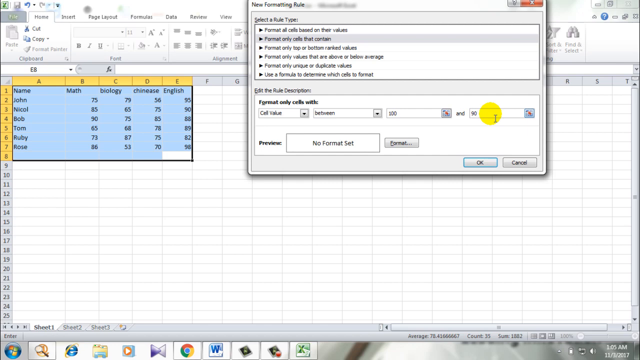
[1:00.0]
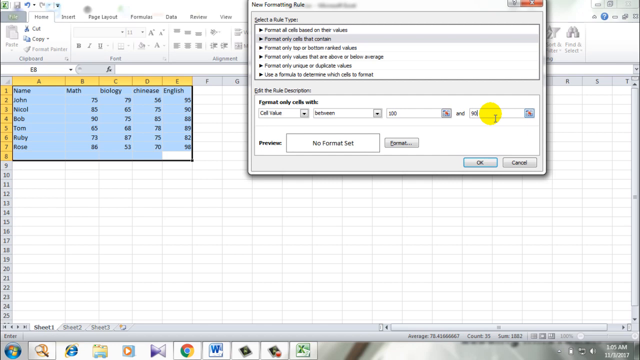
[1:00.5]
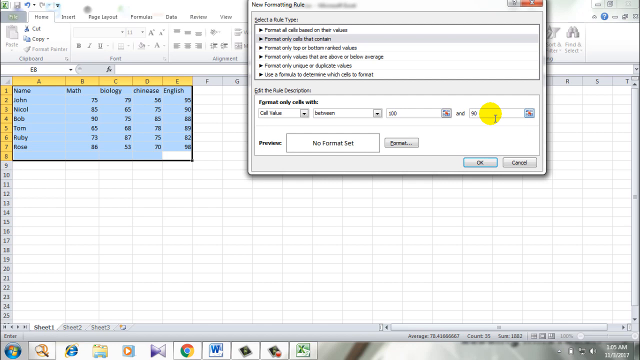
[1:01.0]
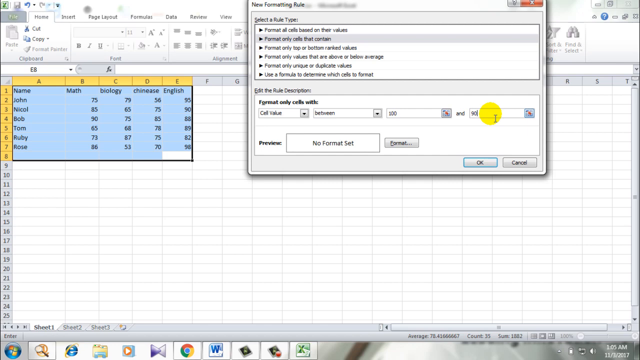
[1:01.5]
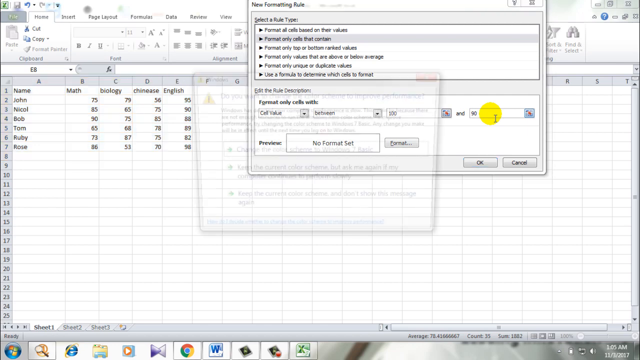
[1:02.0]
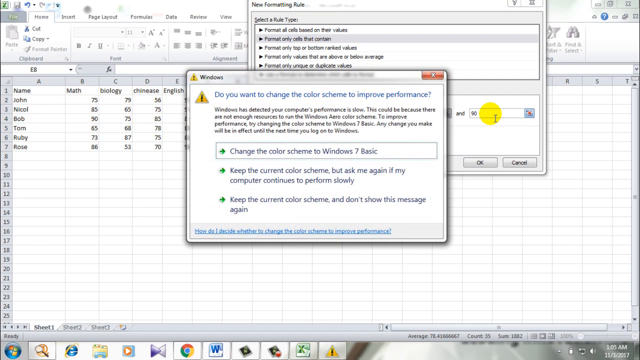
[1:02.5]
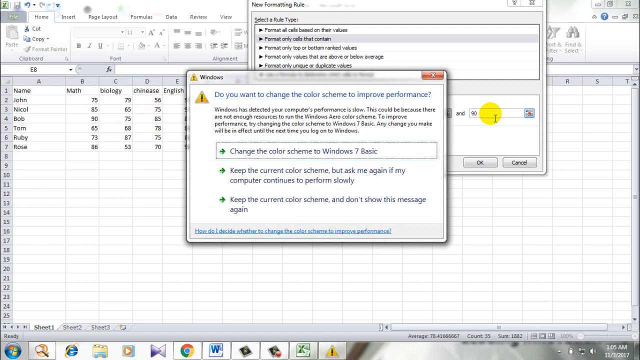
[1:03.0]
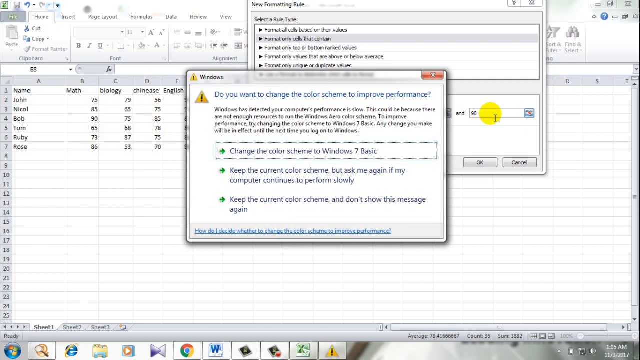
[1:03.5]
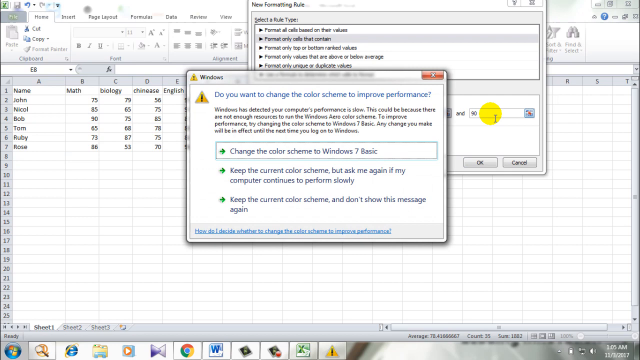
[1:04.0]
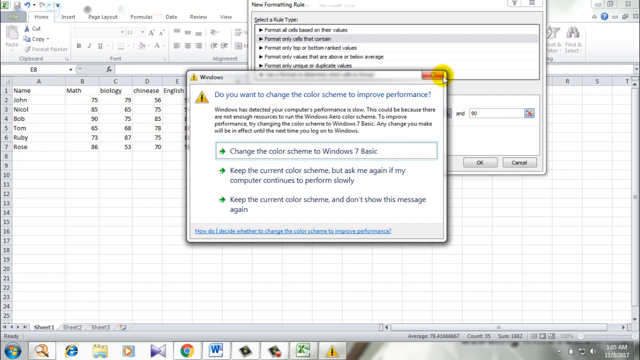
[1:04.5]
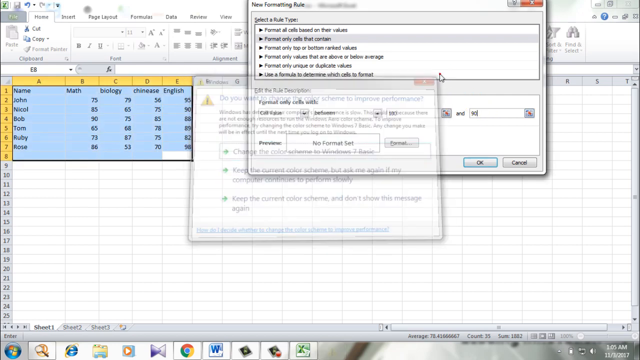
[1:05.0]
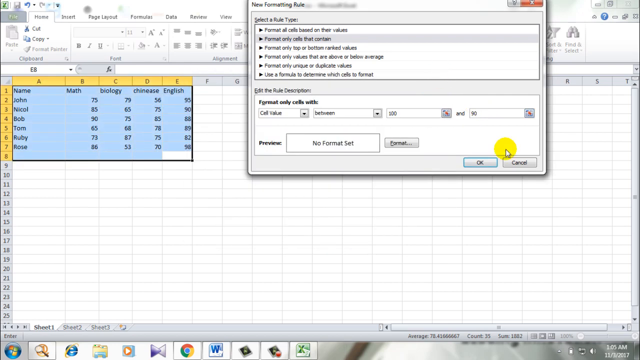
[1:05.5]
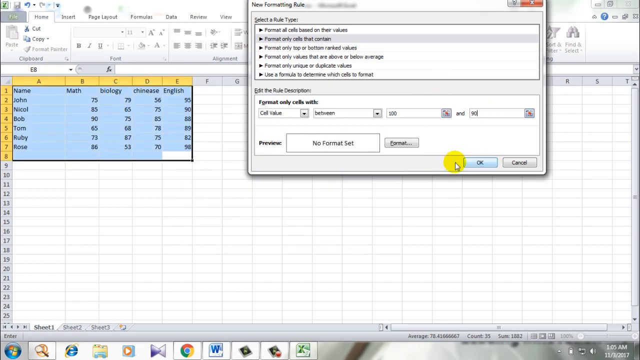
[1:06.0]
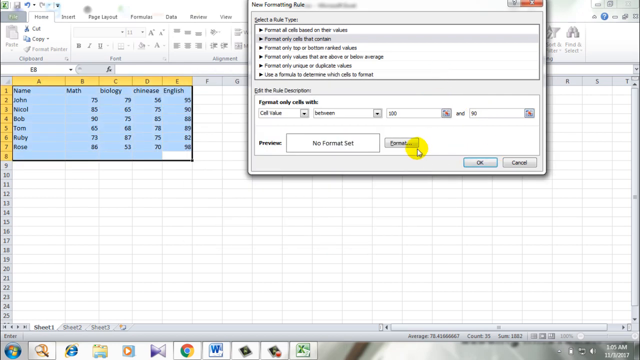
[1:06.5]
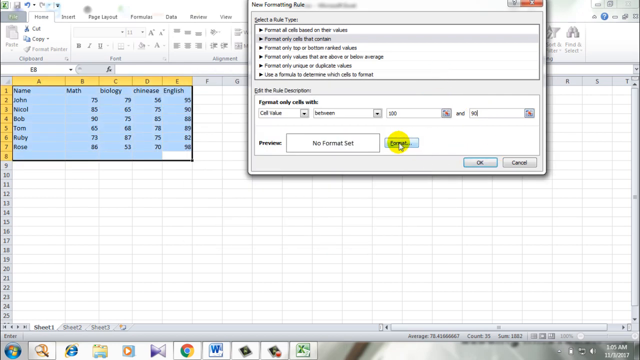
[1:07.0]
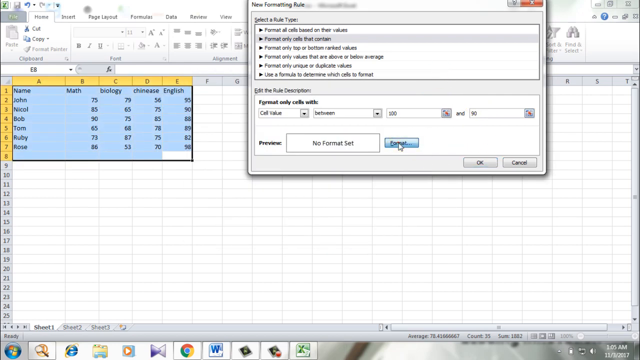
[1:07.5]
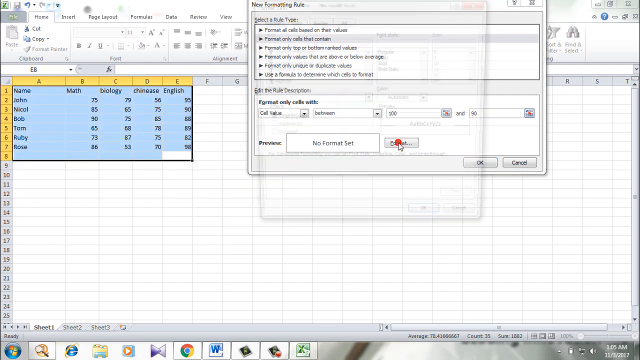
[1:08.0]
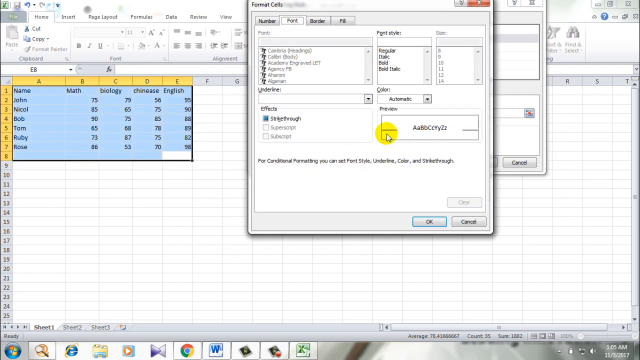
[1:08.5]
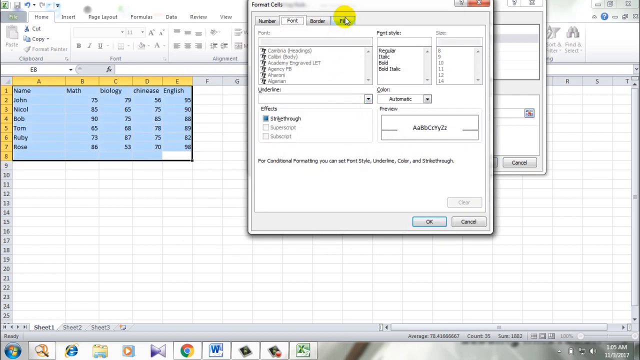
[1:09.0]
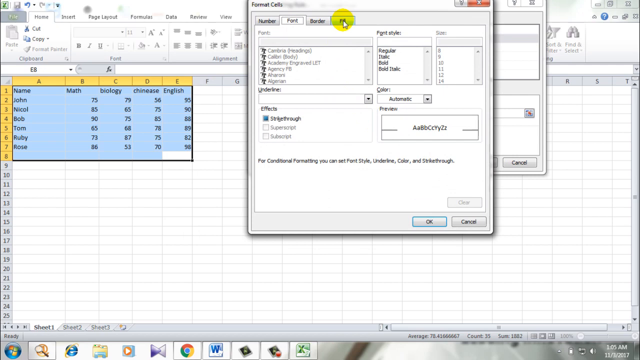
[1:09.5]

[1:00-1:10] The conditional formatting of the table continues. The table is five columns wide, with student names, math, biology, Chinese and English, and seven rows deep, listing the students John, Nicole, Bob, Tom, Ruby and Rose. The instructor, whose cursor has a yellow circle around it, has highlighted from cell E8 up to A1, the entire table plus one row below, gone into Conditional Formatting, and set a rule for cells between 90 and 100. He then goes into Format and into Fill.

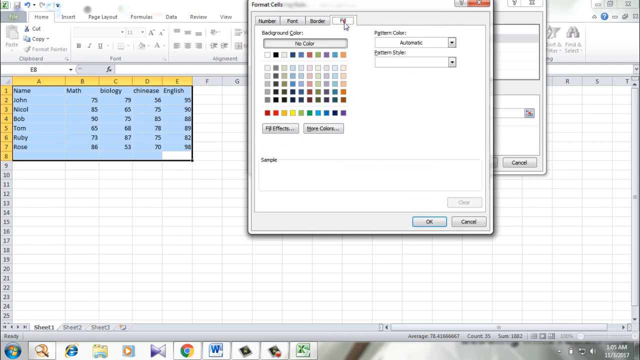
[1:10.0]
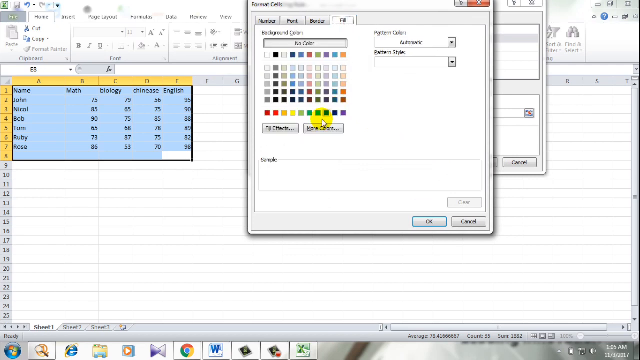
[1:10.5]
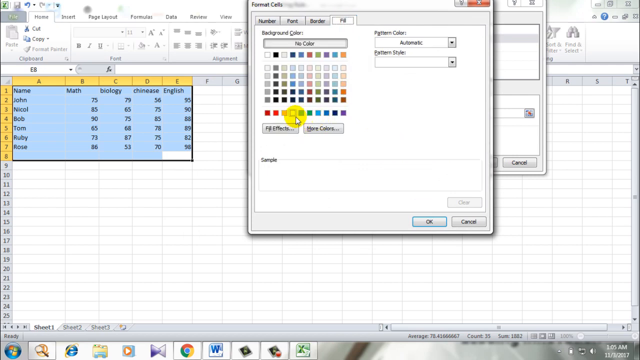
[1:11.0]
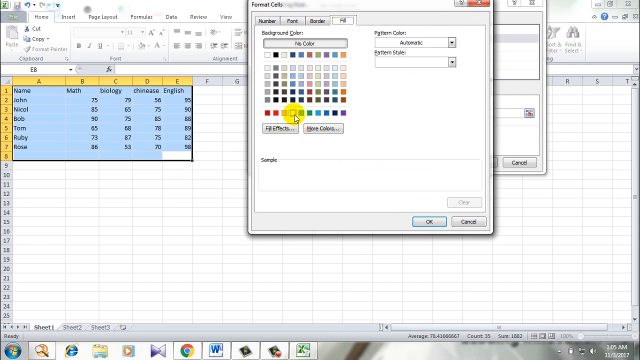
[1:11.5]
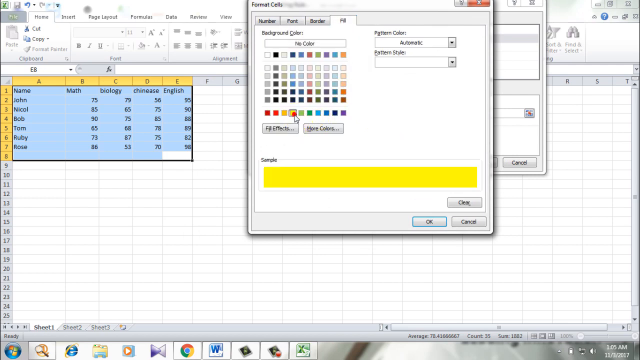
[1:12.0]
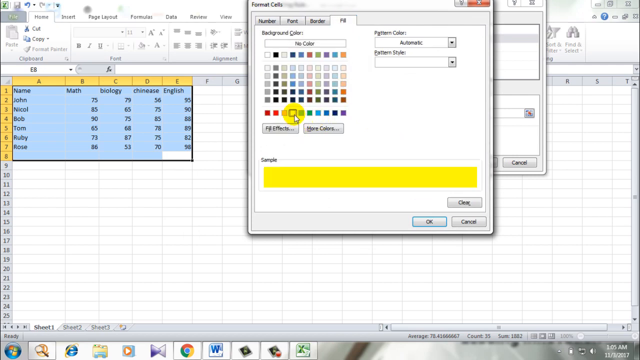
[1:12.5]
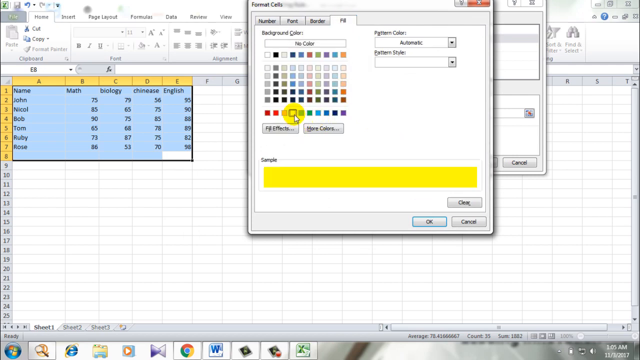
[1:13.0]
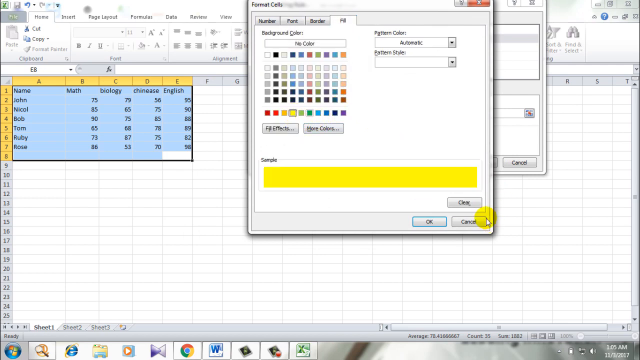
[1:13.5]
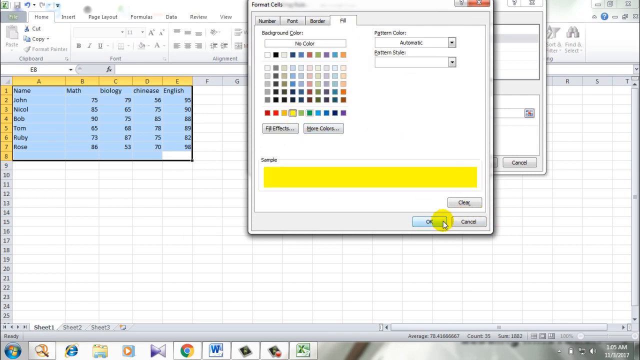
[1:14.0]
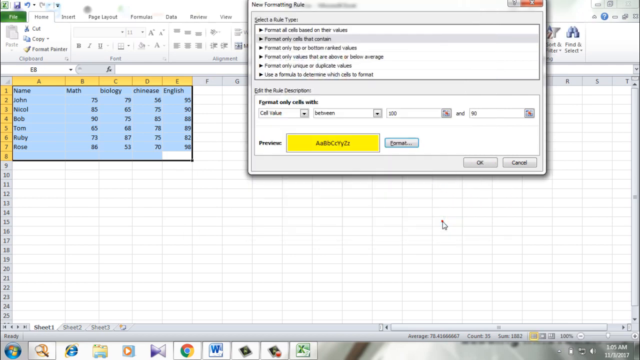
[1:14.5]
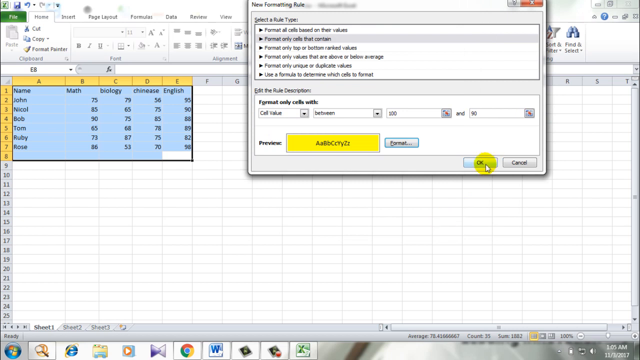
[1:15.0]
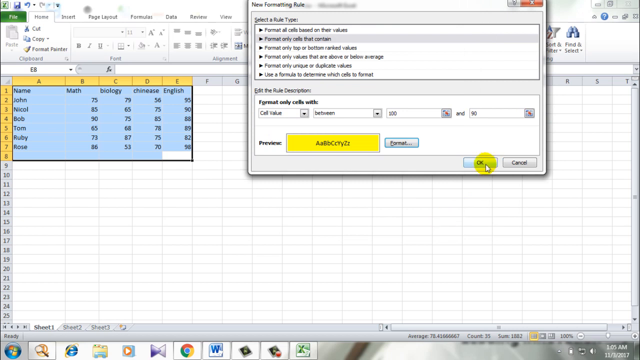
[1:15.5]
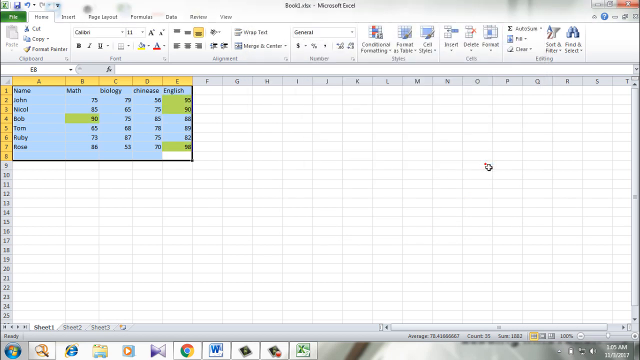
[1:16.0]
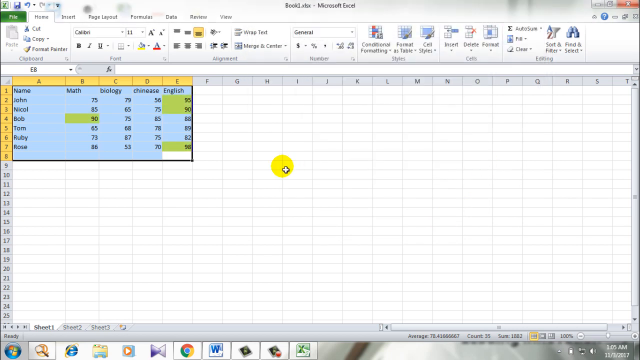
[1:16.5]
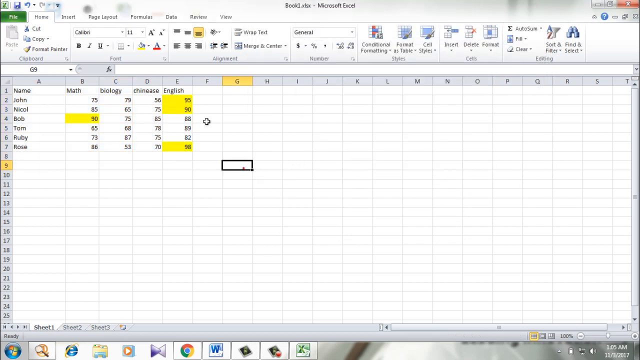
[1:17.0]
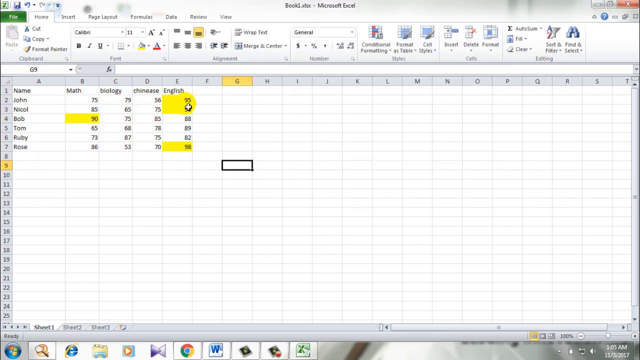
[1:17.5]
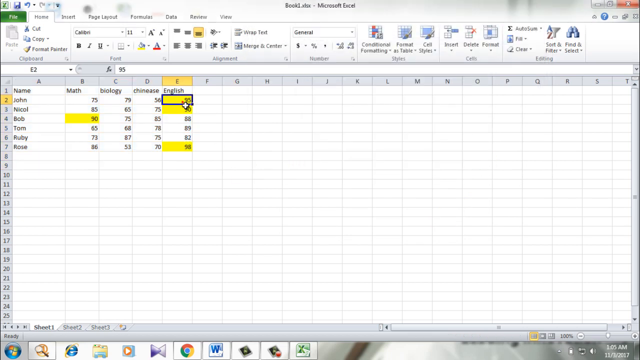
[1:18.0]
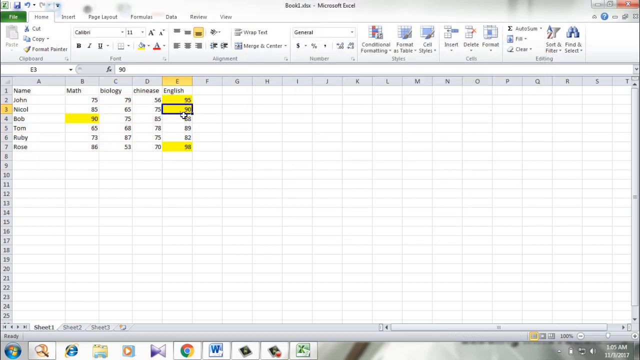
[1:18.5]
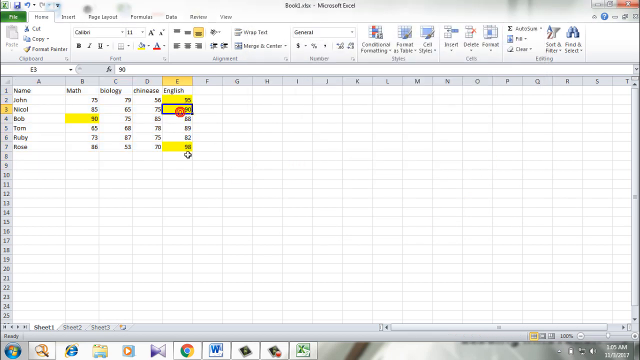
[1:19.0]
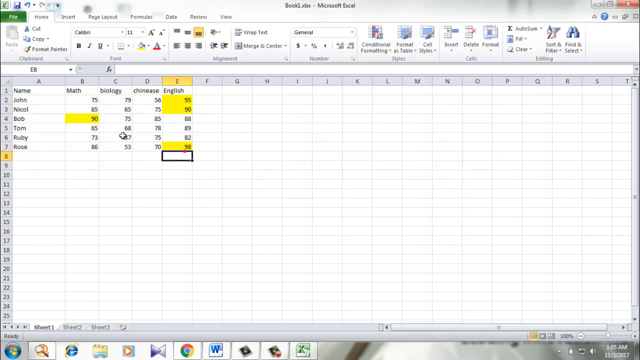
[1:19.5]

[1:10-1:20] A small Excel table, five columns wide and seven rows down, shows students' scores in various subjects: student names in column A, then math, biology, Chinese and English, with the students John, Nicole, Bob, Tom, Ruby and Rose. He highlights from cell E8 up to A1, covering the whole table plus one row below, goes into Conditional Formatting, clicks on cells that contain, and sets the range between 90 and 100. He chooses to fill the whole cell, not just the text, with a bright yellow color, then clicks OK. Four values in the table are now highlighted in fluorescent yellow.